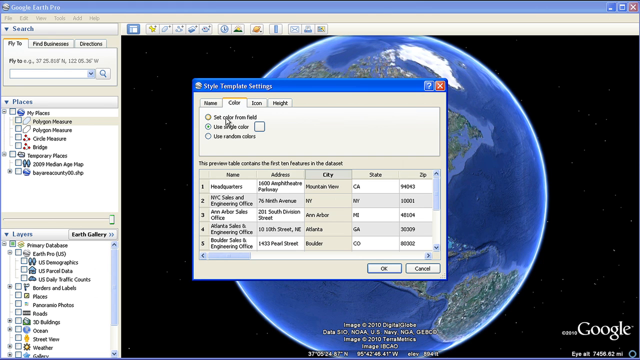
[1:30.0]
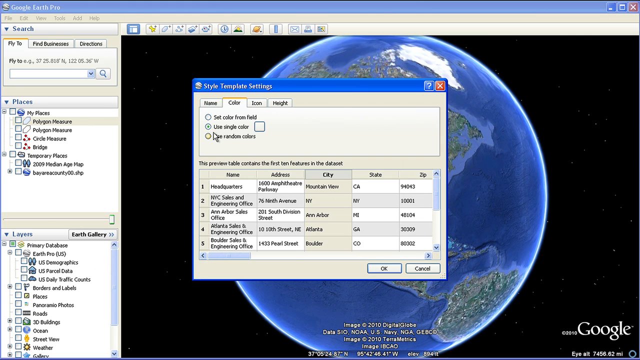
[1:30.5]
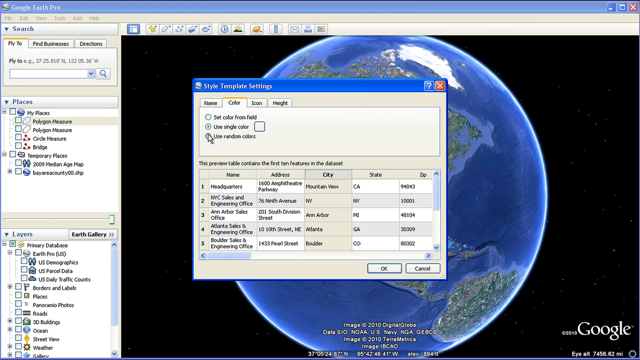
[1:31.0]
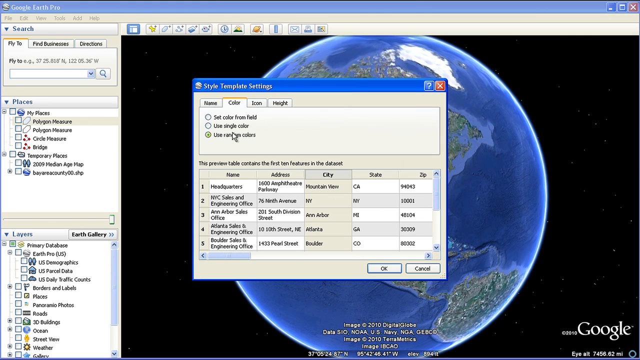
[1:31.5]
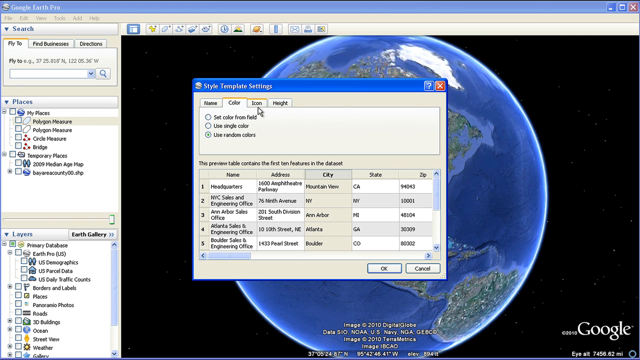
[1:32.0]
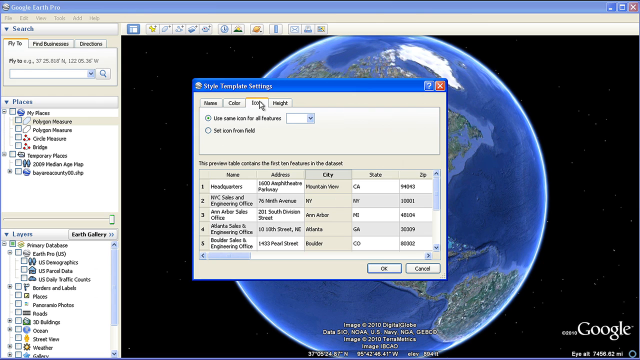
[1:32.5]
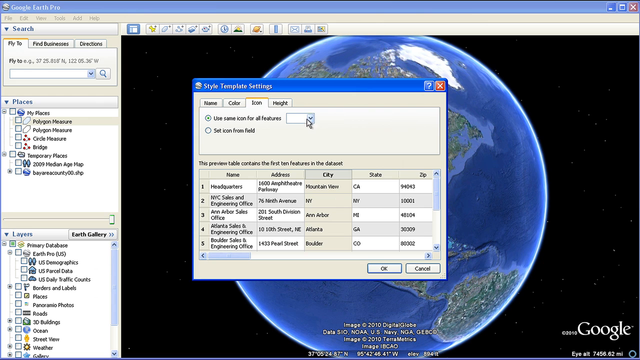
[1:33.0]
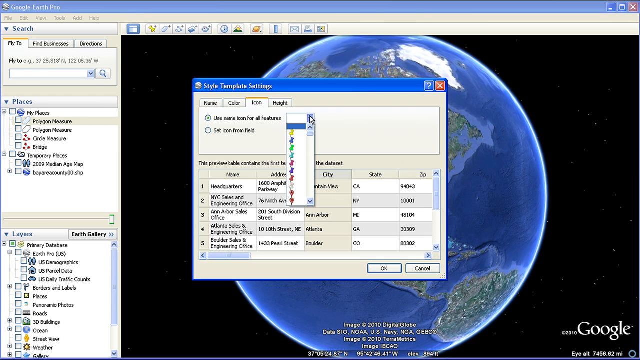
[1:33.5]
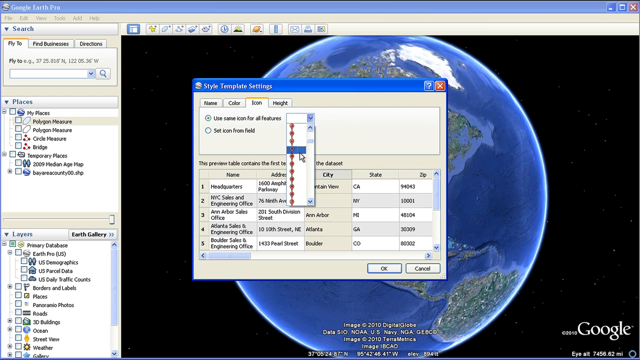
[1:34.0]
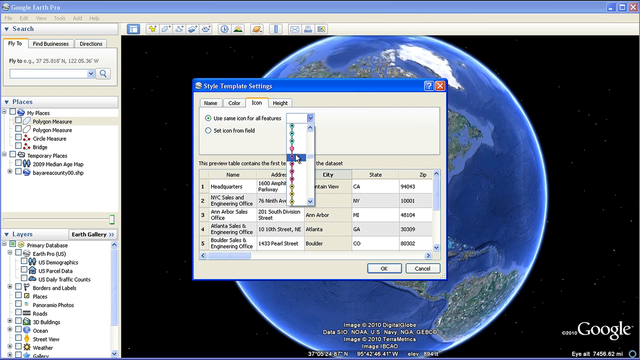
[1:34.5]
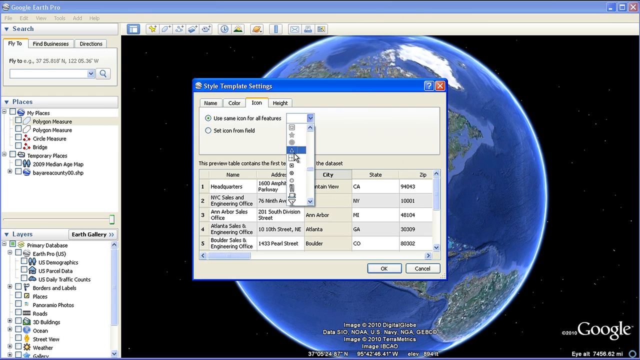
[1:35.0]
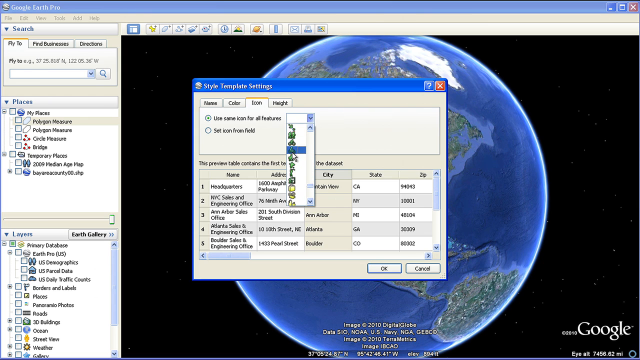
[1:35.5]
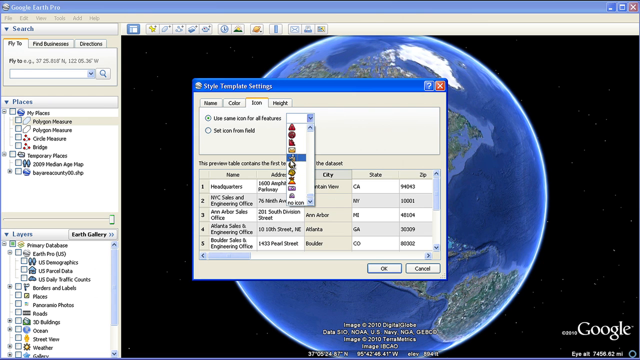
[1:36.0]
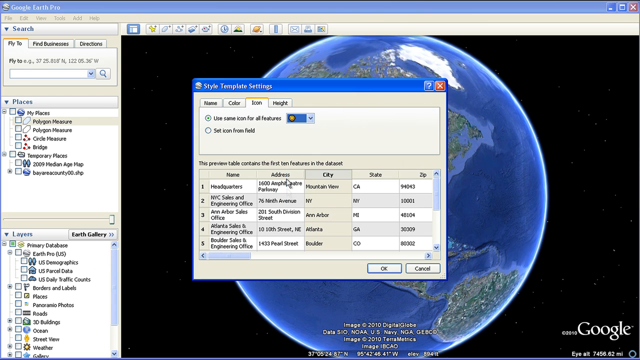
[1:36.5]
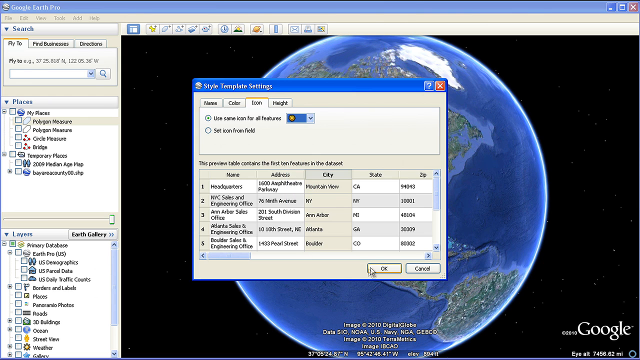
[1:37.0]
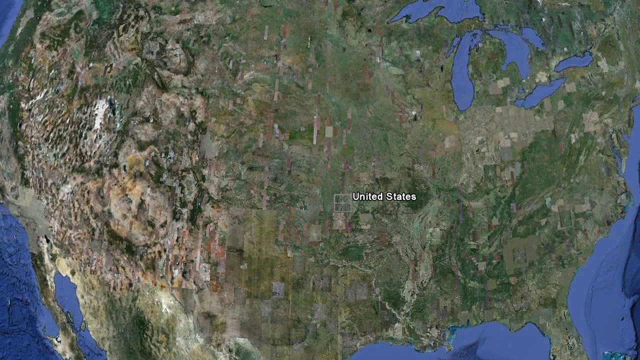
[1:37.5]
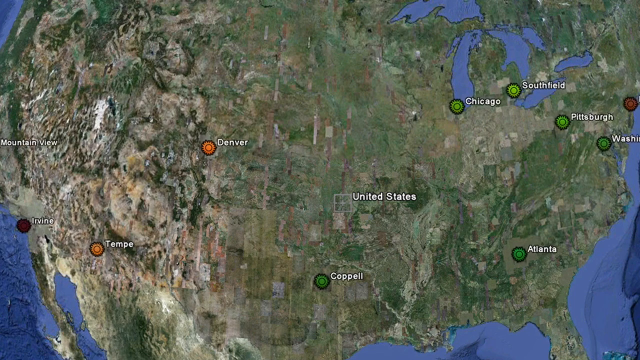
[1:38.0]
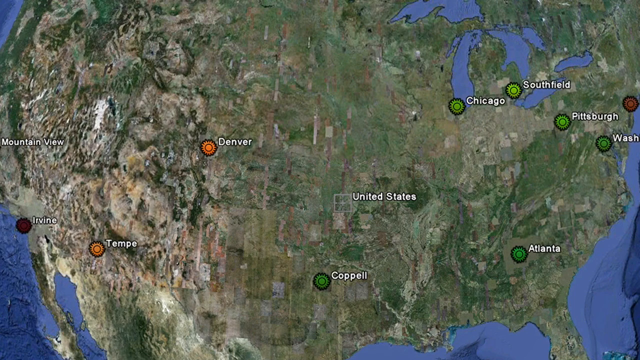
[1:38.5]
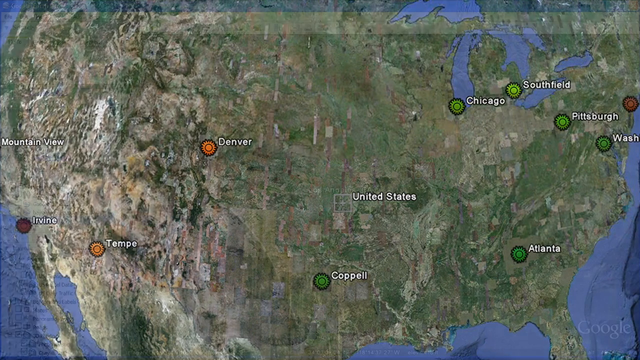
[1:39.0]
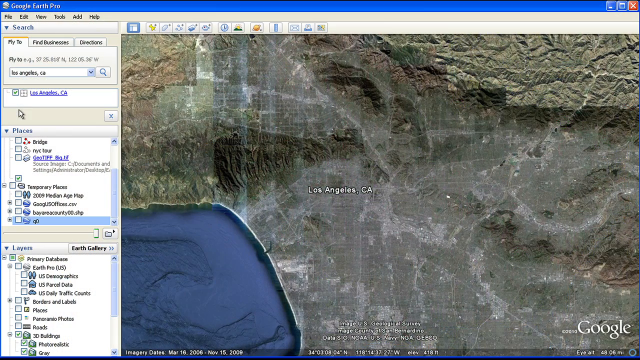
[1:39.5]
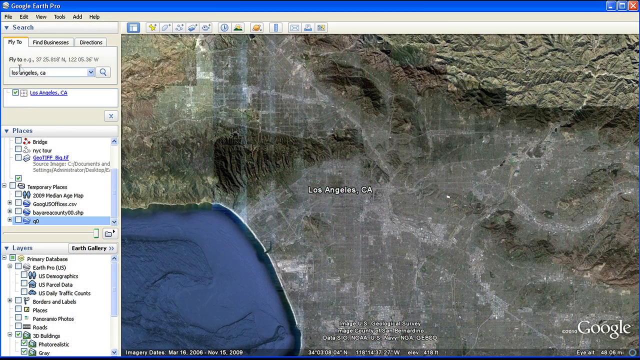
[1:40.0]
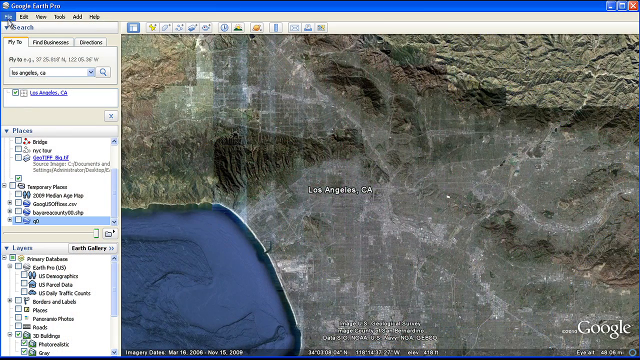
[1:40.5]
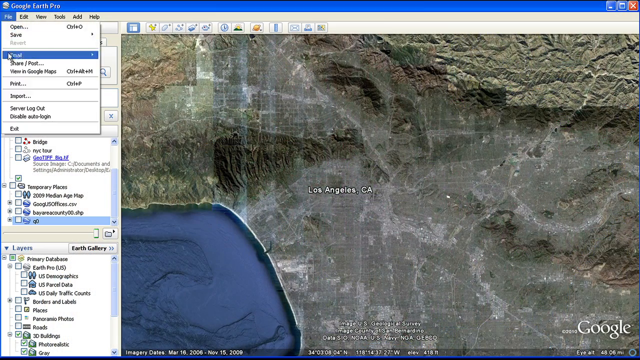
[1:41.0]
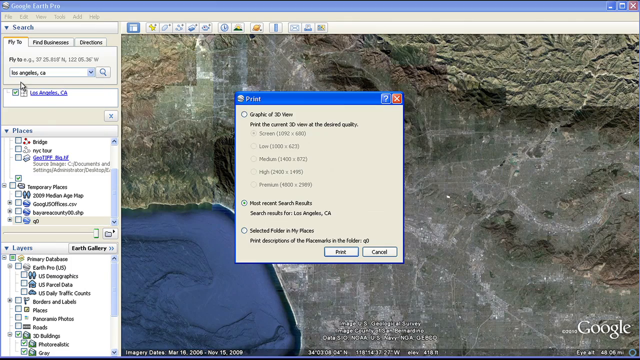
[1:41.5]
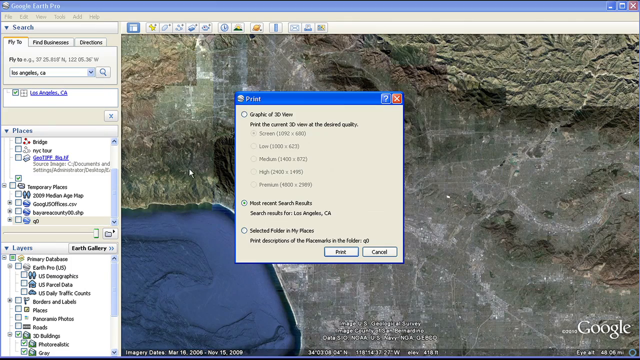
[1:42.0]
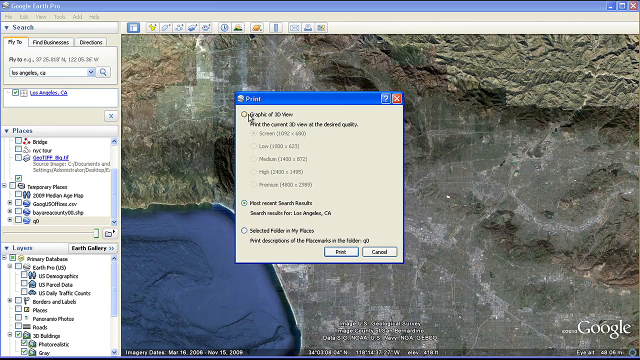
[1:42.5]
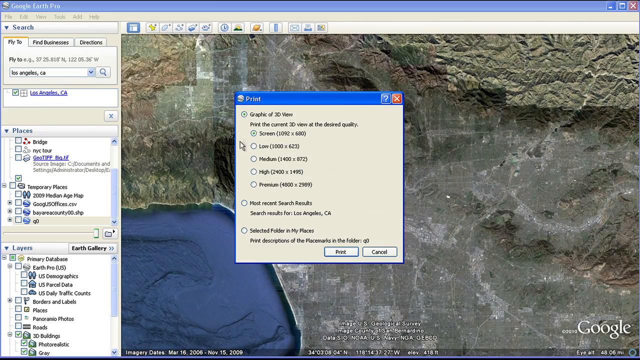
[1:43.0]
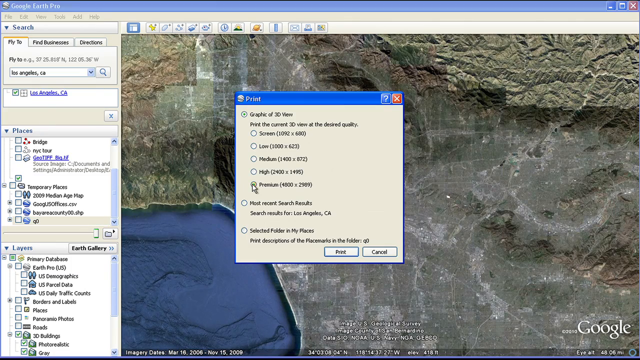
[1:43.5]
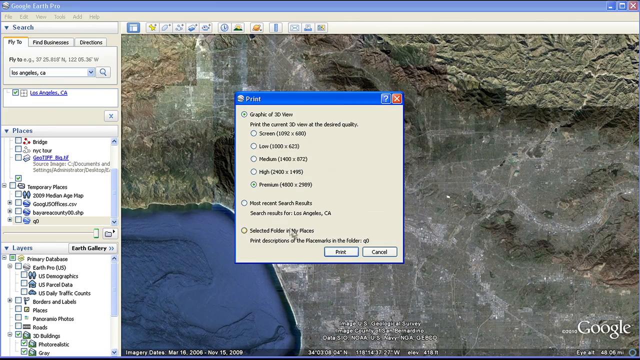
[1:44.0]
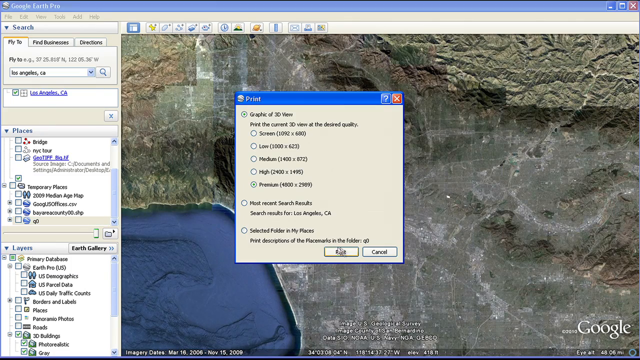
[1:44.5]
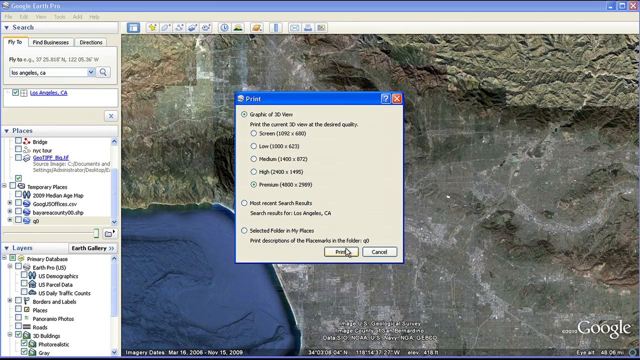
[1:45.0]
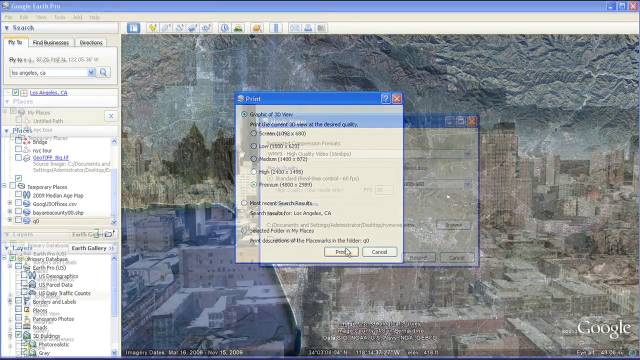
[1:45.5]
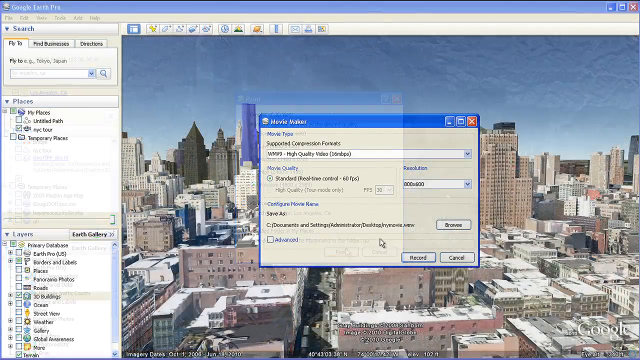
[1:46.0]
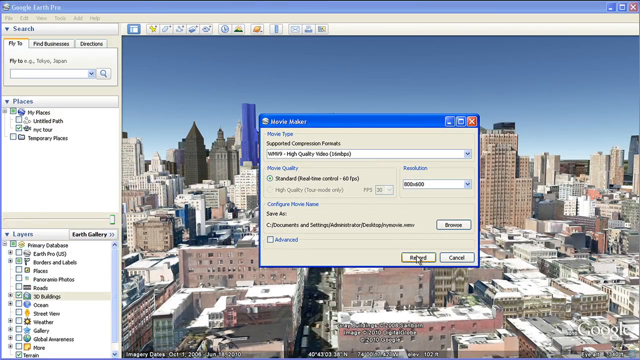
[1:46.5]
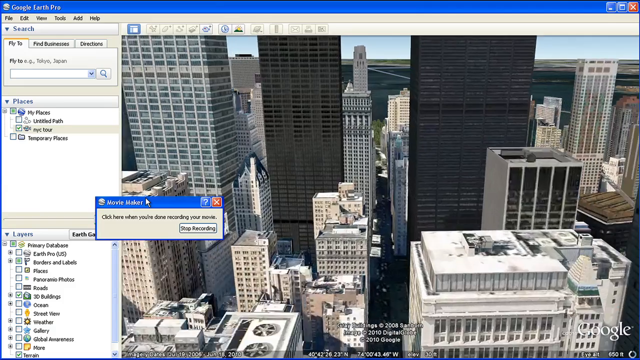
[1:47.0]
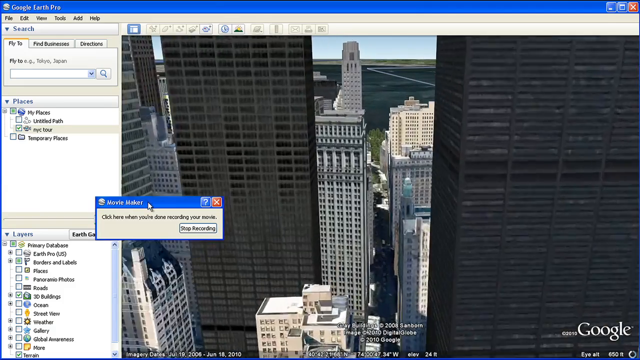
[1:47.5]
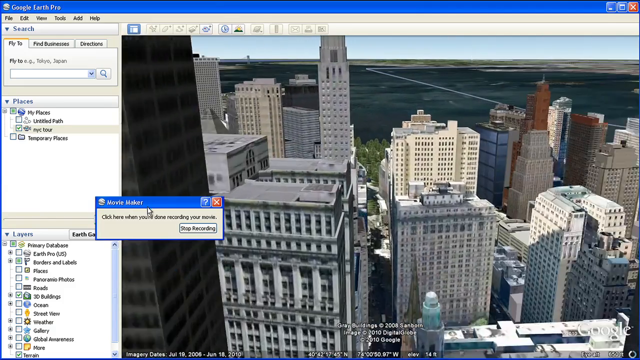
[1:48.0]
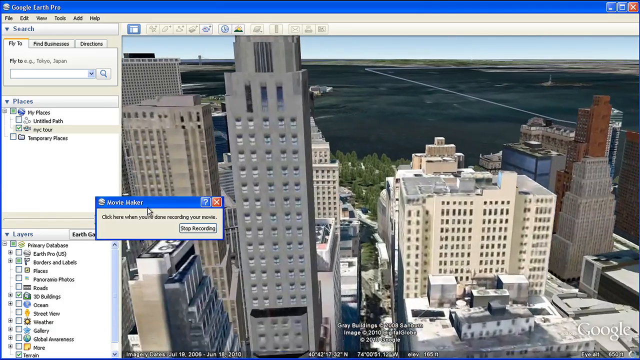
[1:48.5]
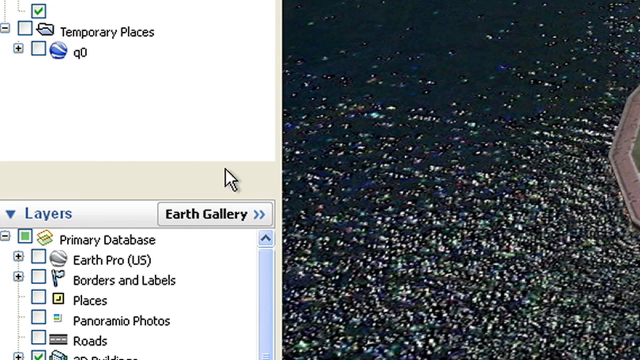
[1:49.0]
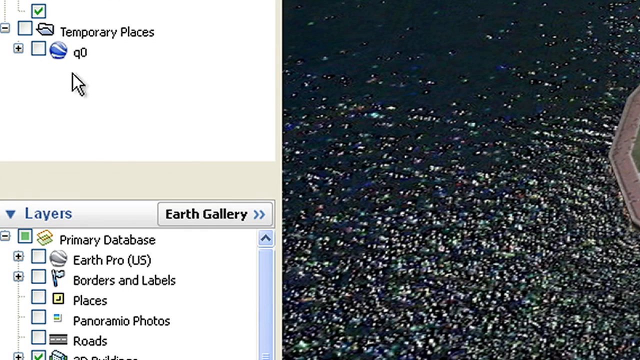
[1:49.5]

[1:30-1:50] In the color tab, the option use random colors is selected, and in the icon tab the option use same icon for all features is chosen. A drop-down reveals several pins in different colors, and a black circle with yellow in it is clicked, followed by OK. A map of the United States appears, with different cities highlighted with something like a sun in different colors. The File tab is opened again and the Print option clicked; graphic of 3D view is chosen, premium is selected, and it is printed again. Next, a movie maker dialog appears and record is clicked, showing a view in a city moving between skyscrapers, while the movie maker dialog indicates a button can be clicked to stop recording when done.